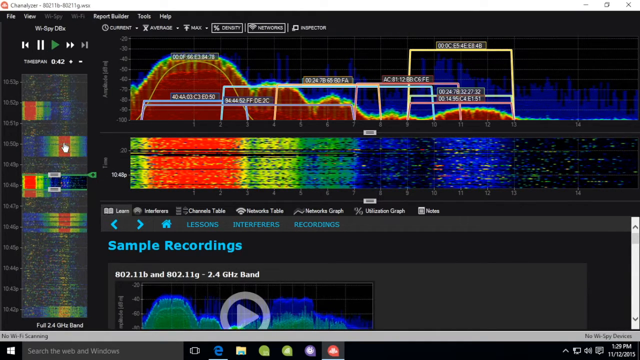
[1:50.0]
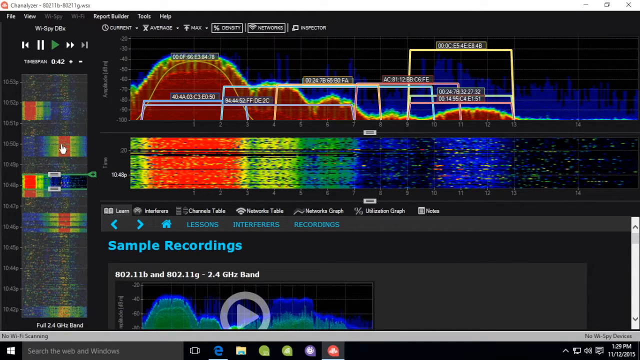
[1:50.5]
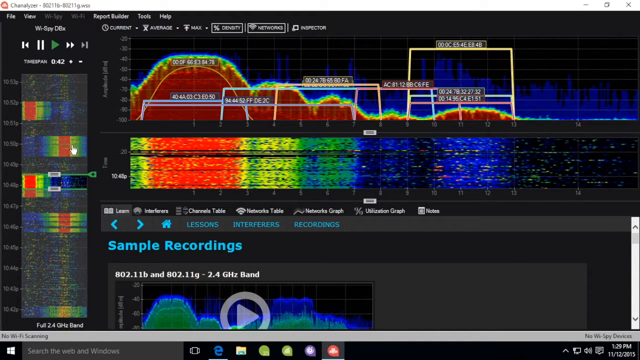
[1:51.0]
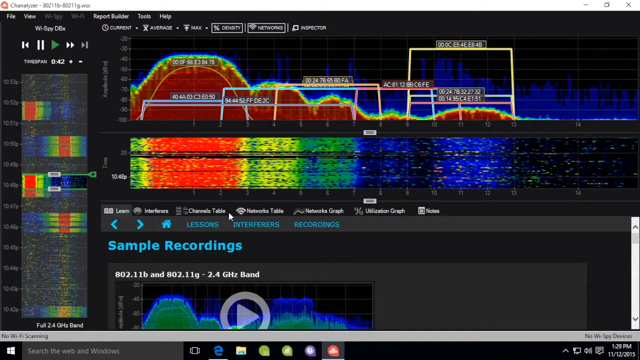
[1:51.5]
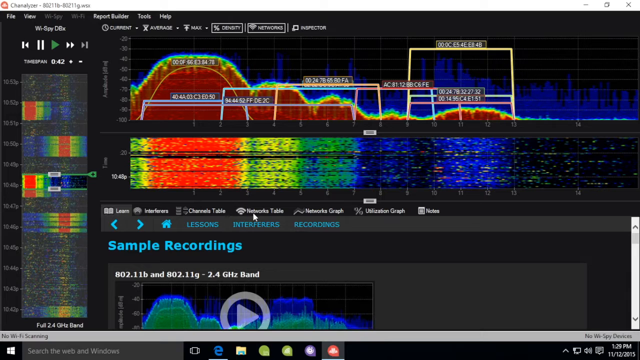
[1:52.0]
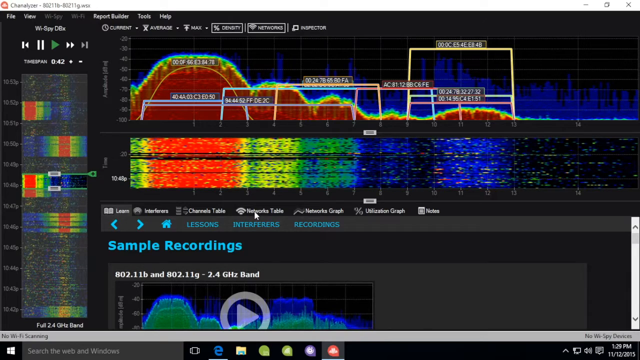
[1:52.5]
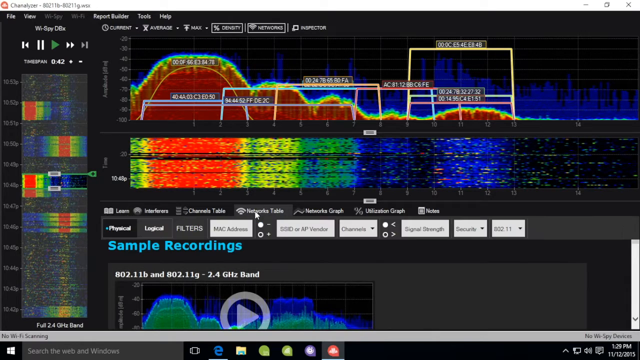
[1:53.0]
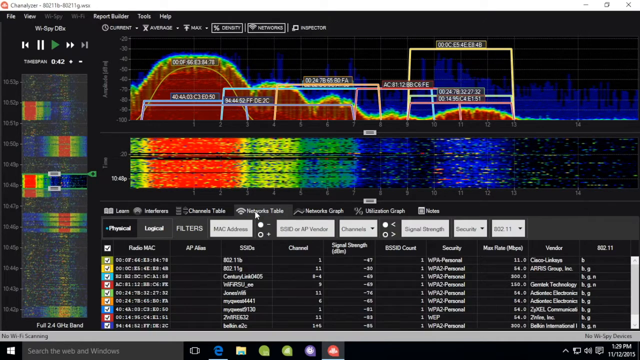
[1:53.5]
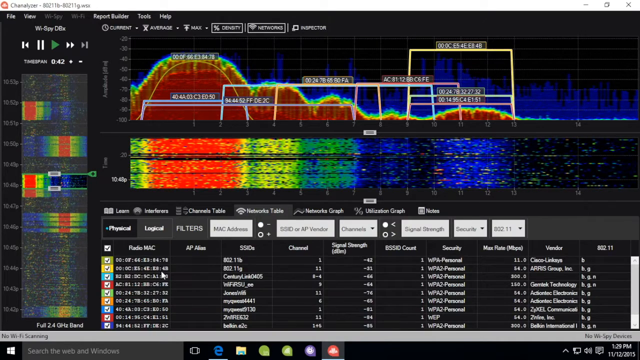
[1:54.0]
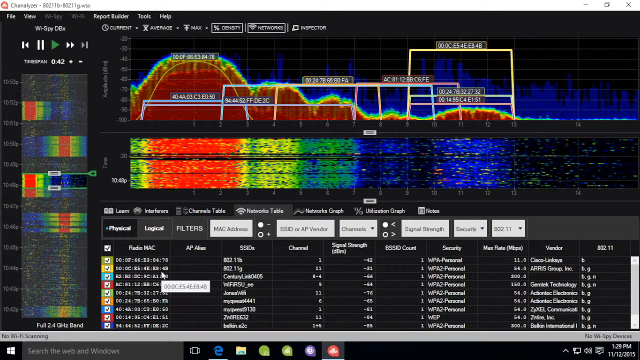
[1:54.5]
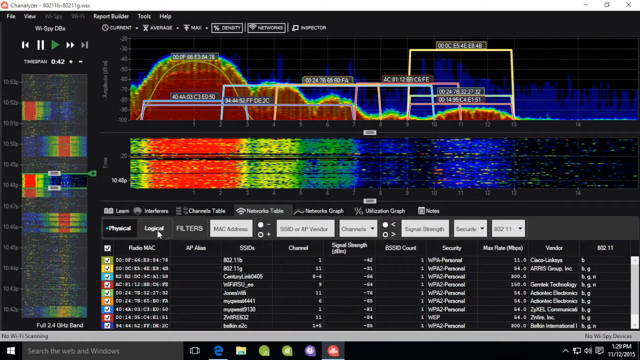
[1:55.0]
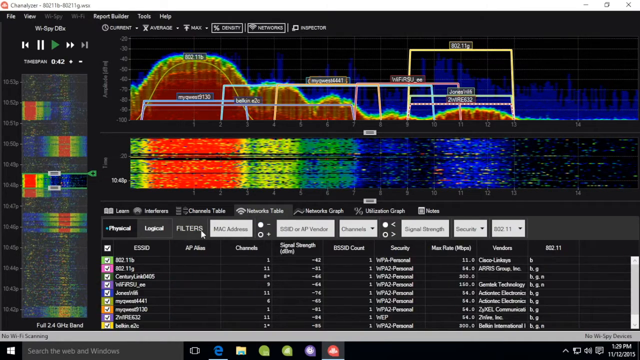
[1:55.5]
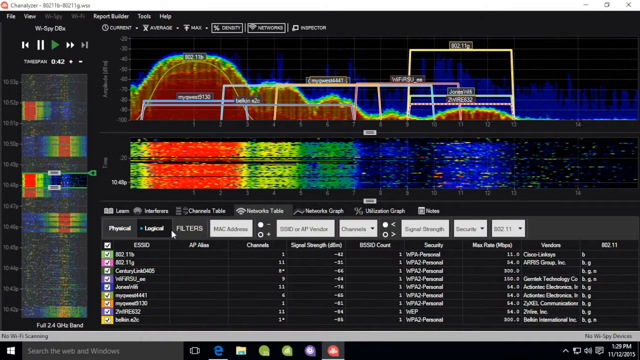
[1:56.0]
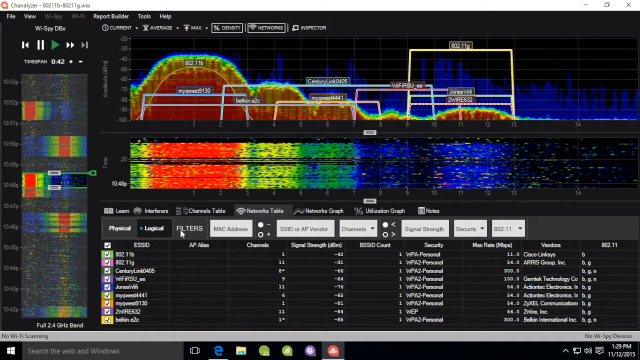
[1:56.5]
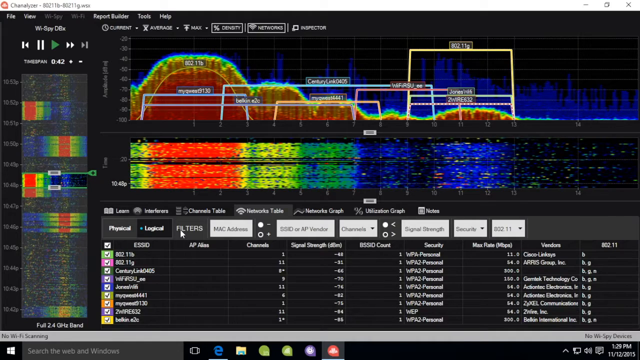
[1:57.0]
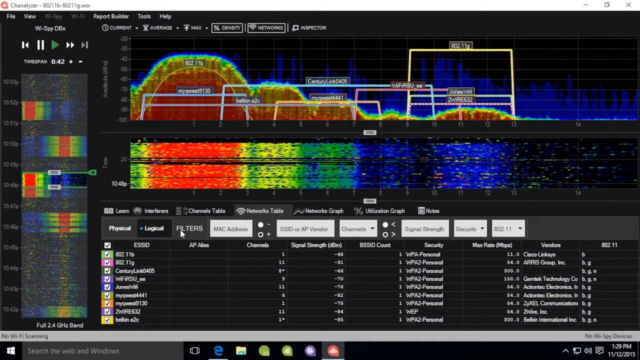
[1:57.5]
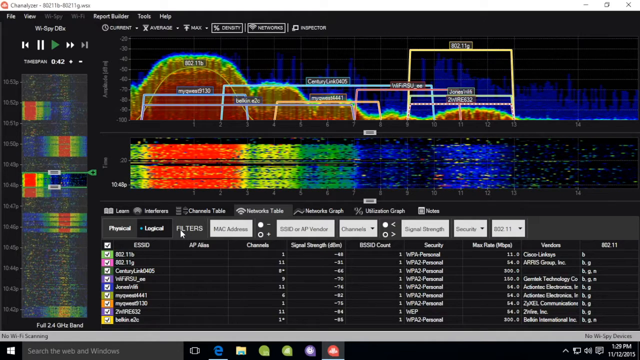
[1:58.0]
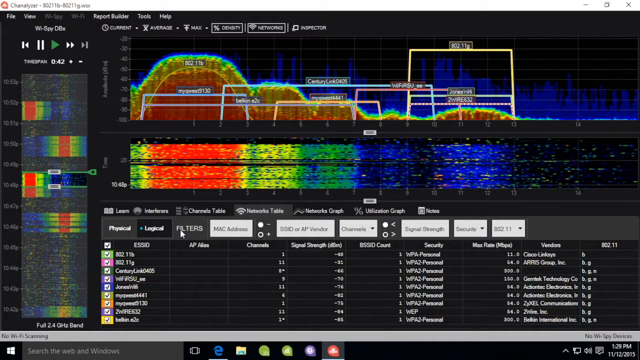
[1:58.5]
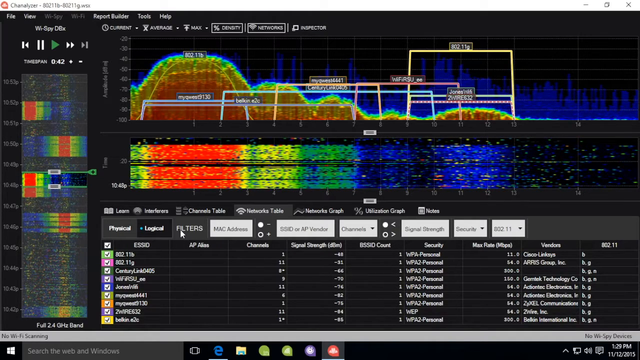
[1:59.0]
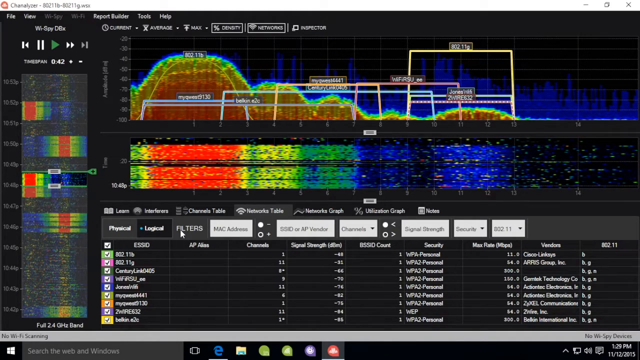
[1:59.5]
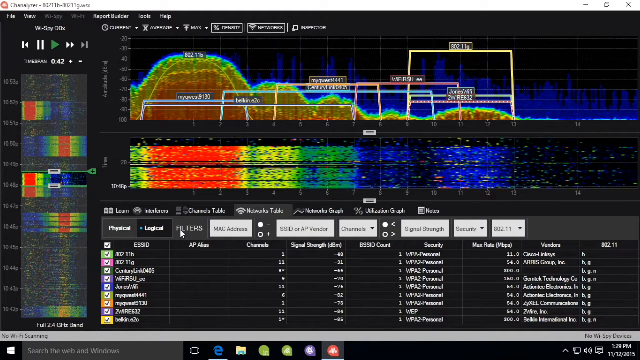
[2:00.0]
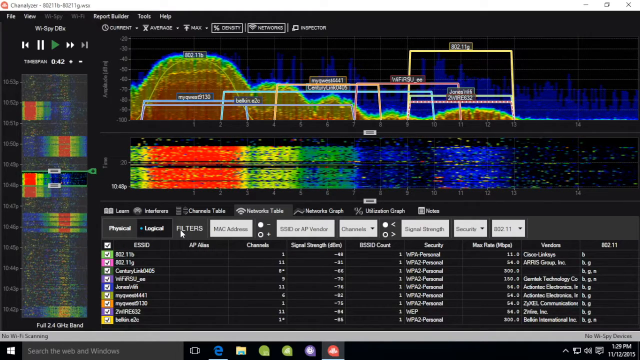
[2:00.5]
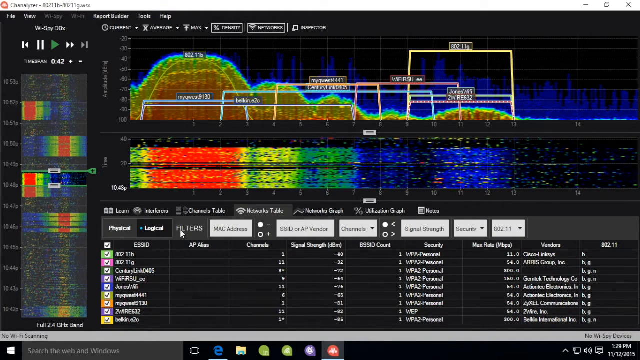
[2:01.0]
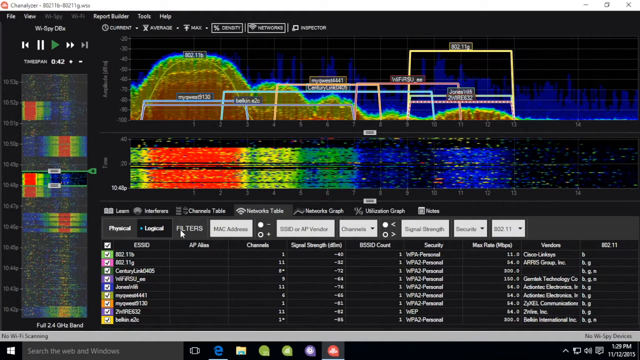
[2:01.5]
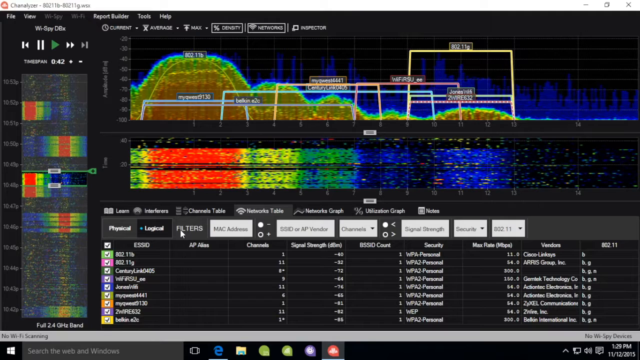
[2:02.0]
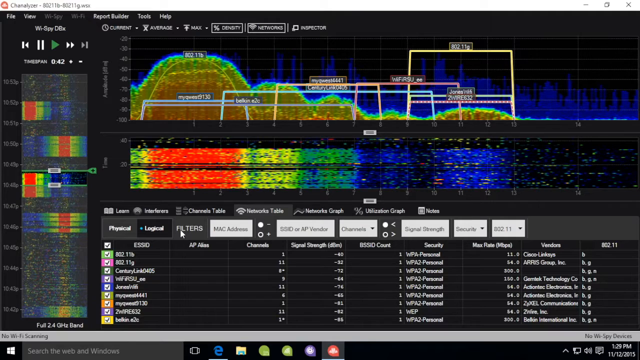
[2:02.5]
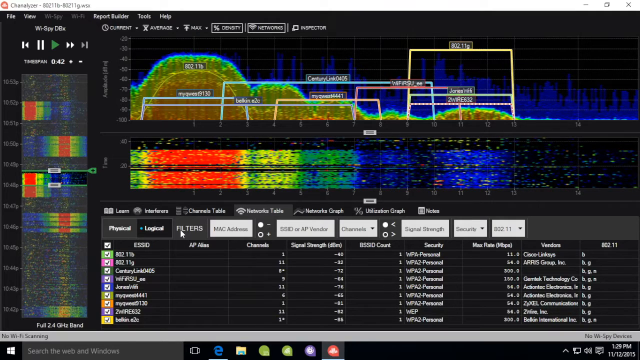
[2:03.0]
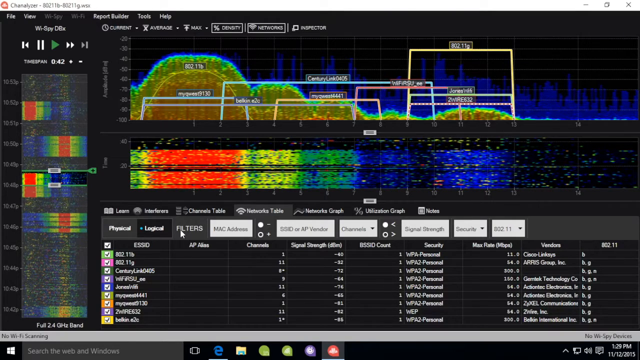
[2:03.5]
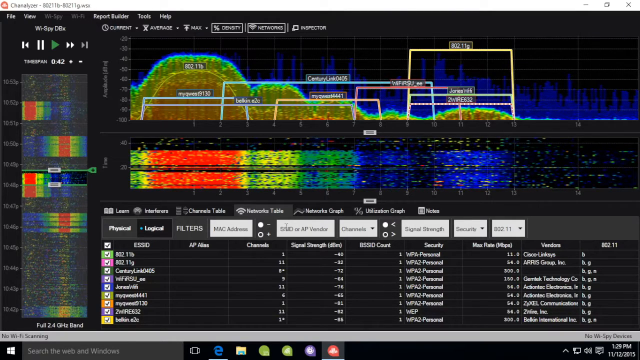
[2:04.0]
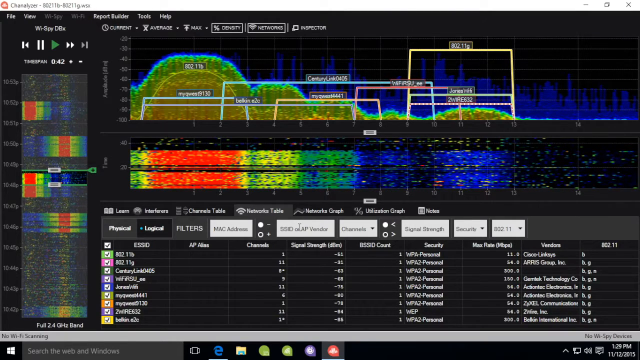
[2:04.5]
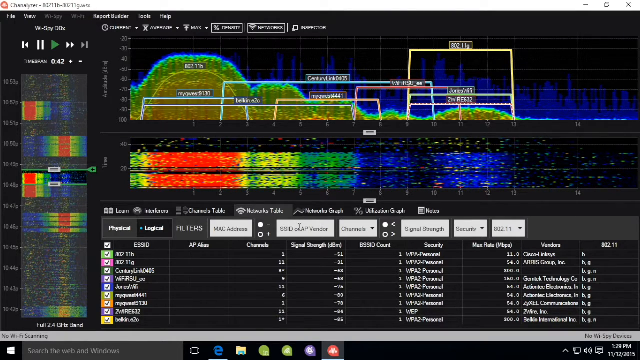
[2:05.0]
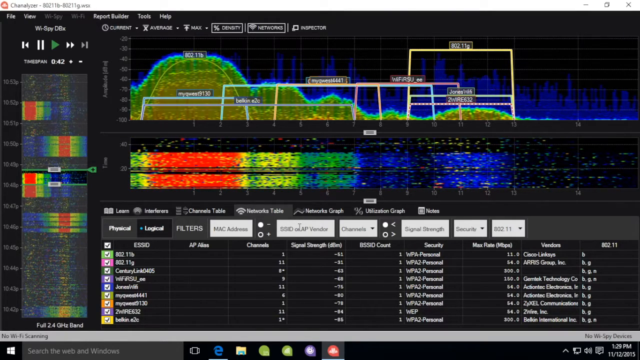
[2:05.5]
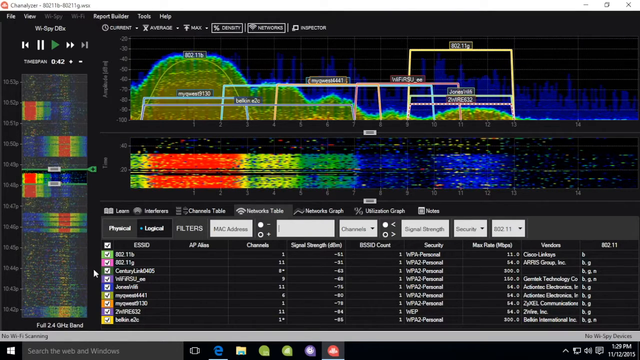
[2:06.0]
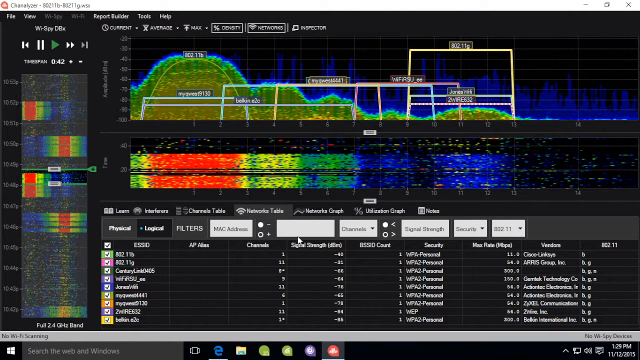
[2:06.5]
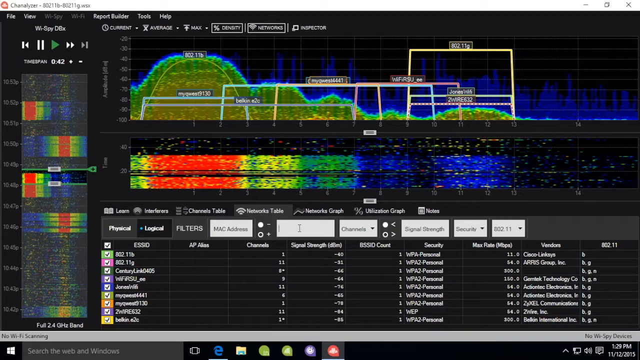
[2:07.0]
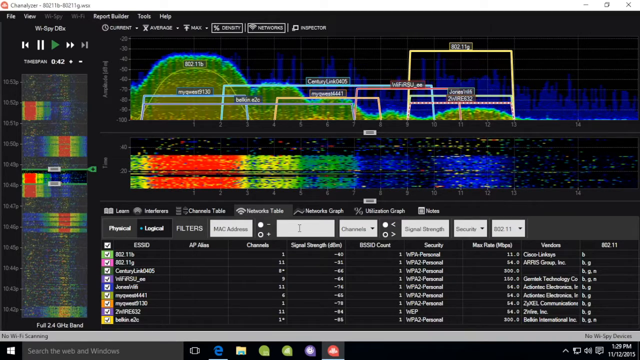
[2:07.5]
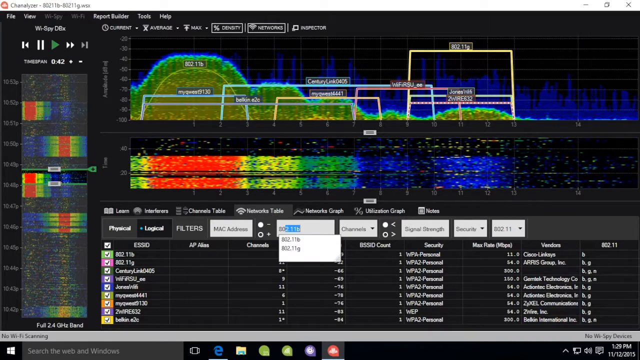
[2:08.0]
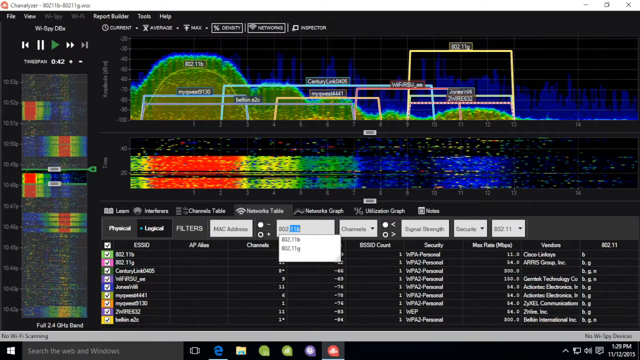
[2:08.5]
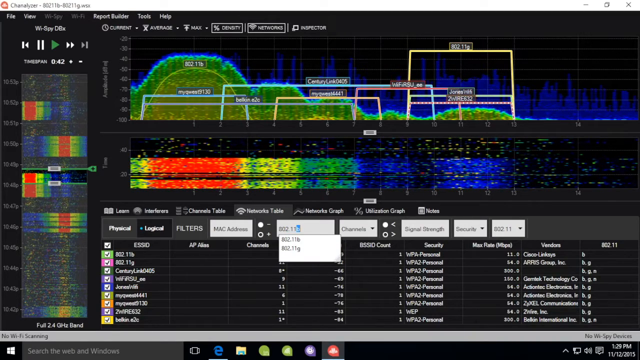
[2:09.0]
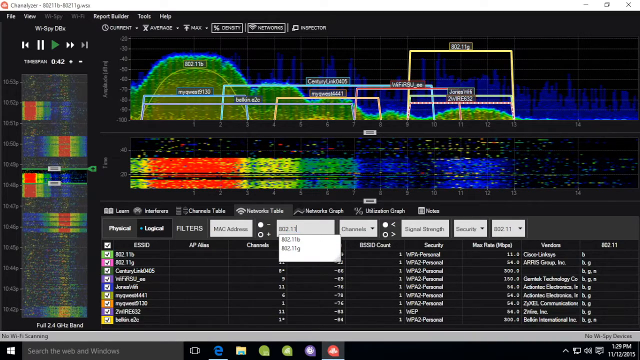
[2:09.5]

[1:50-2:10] A screenshot shows various 802.11b and 802.11g networks, with a network table listing physical and logical addresses for whatever is selected. The networks' information includes the frequencies they operate on, channels, MAC addresses and IP addresses, and there is a search for 802.11b or g networks and sample recordings of packet data.